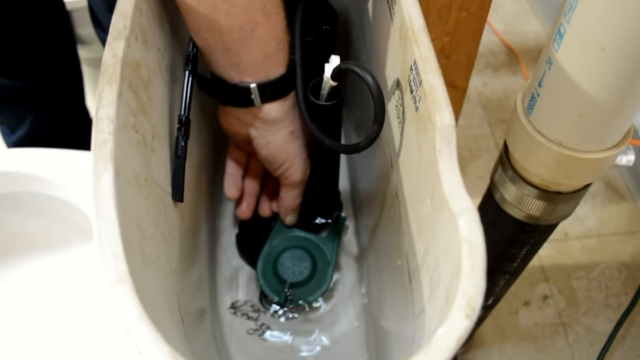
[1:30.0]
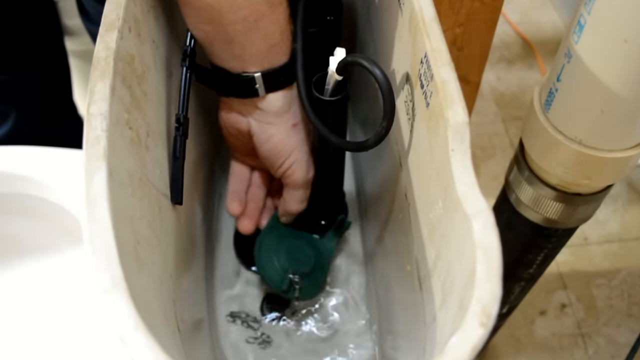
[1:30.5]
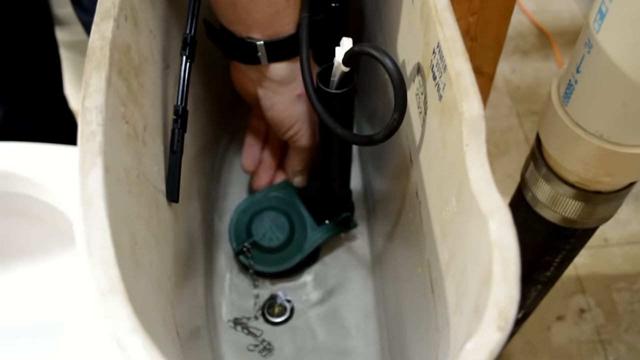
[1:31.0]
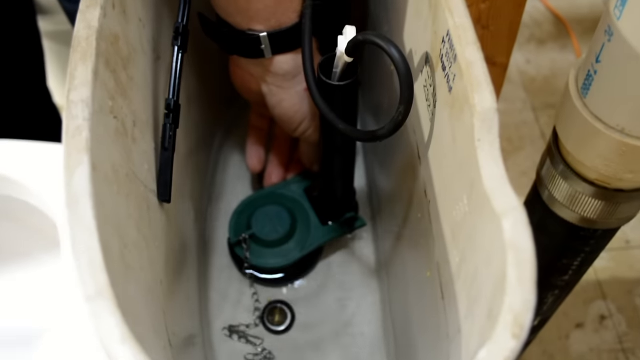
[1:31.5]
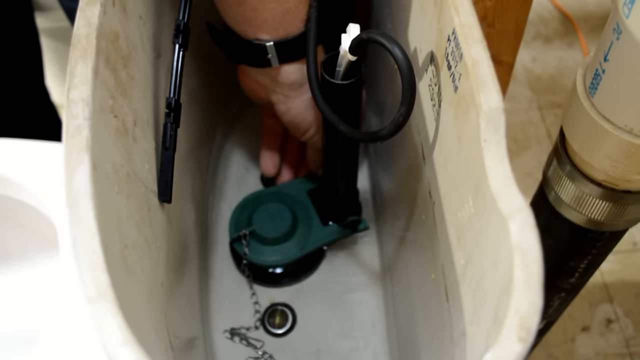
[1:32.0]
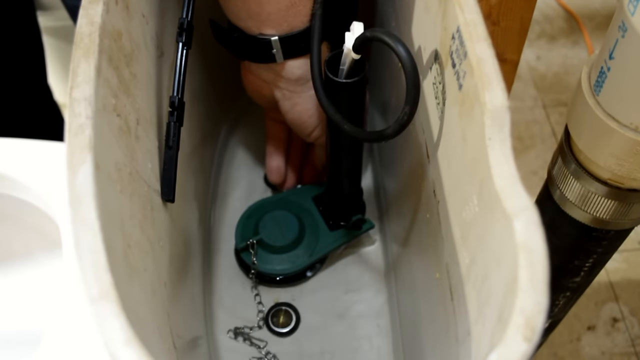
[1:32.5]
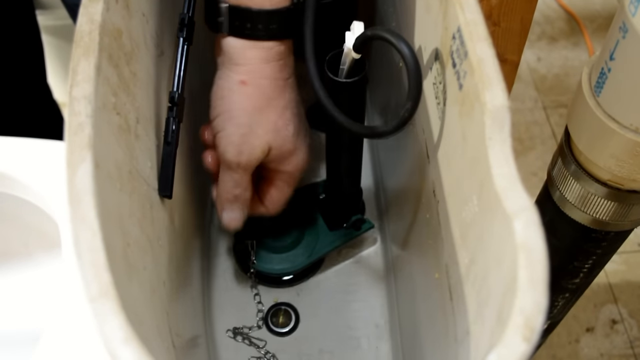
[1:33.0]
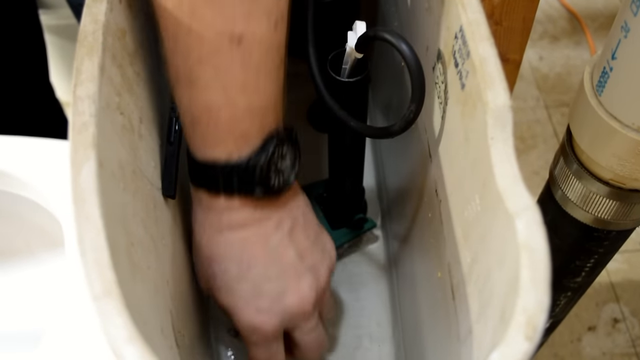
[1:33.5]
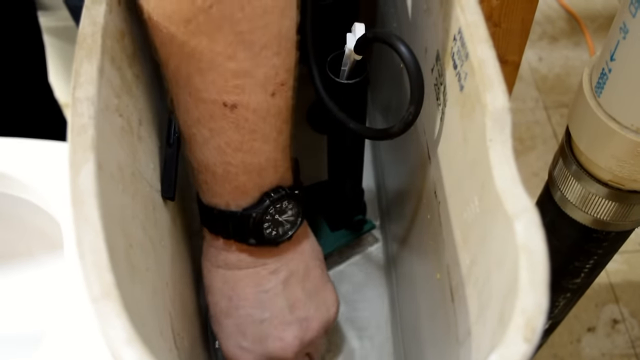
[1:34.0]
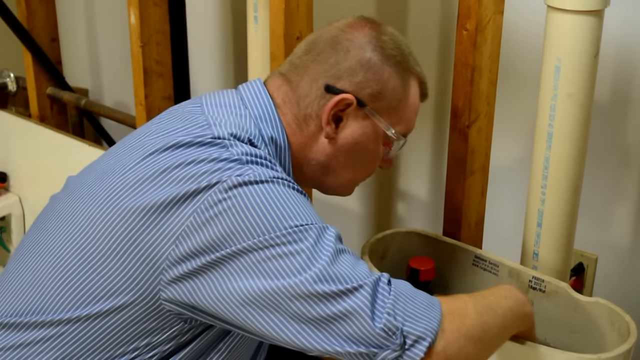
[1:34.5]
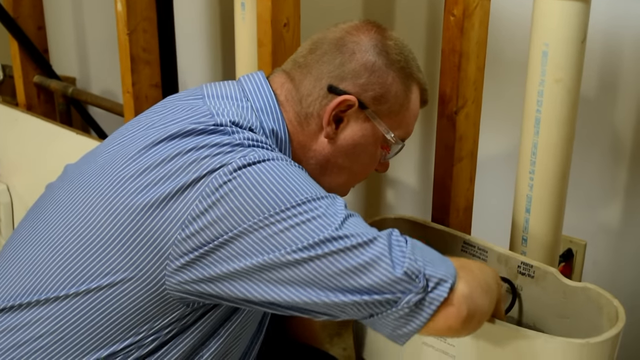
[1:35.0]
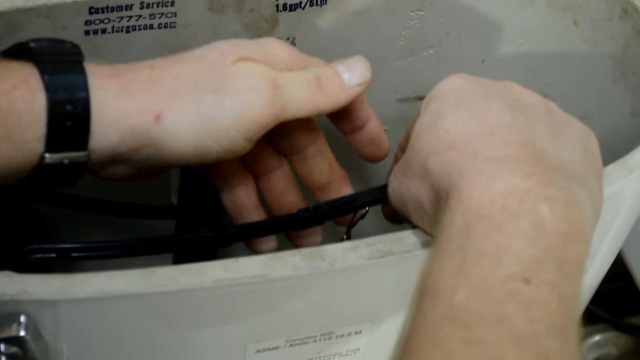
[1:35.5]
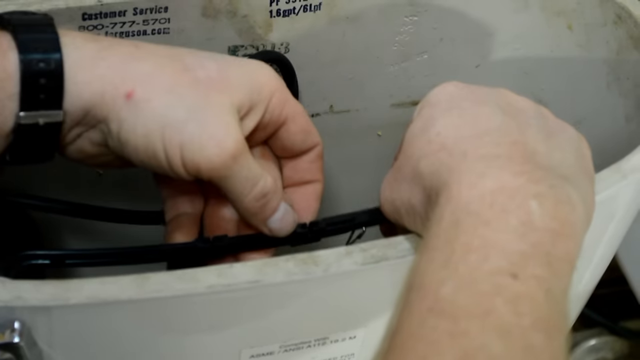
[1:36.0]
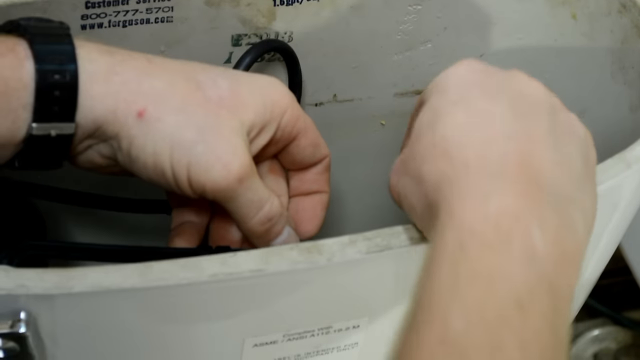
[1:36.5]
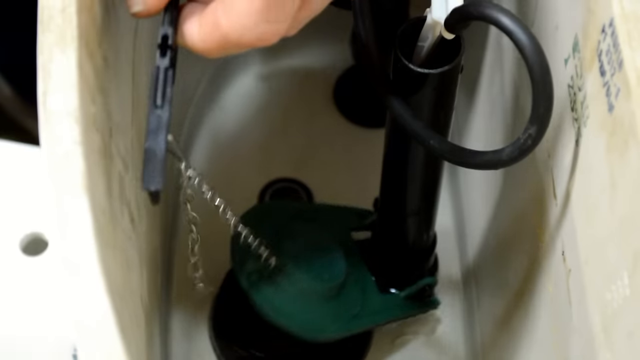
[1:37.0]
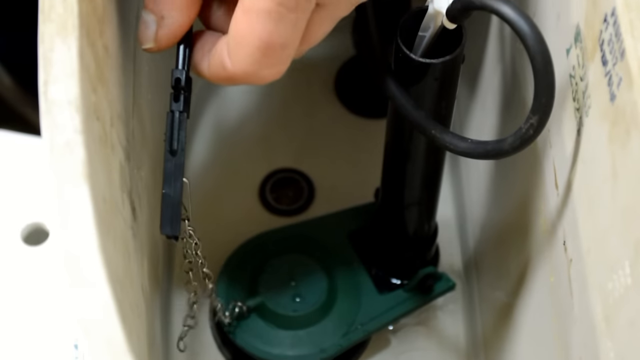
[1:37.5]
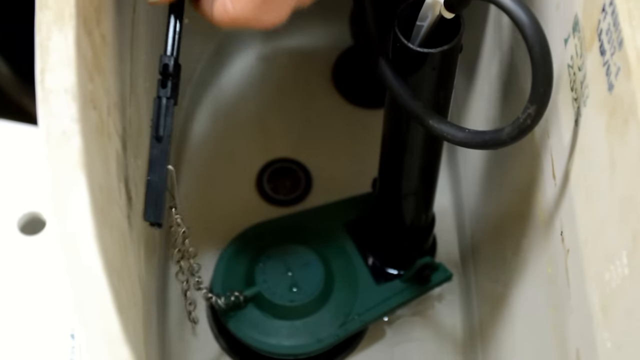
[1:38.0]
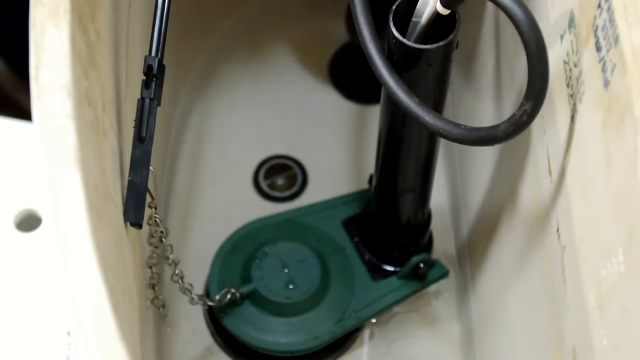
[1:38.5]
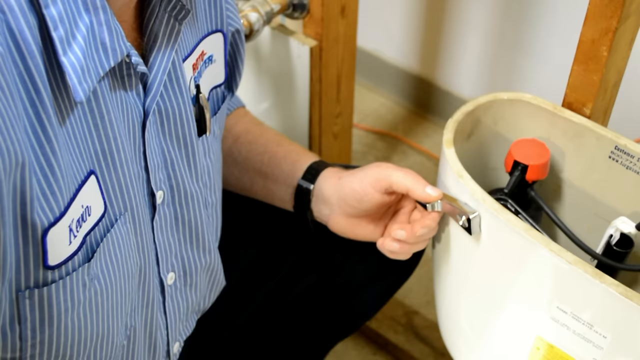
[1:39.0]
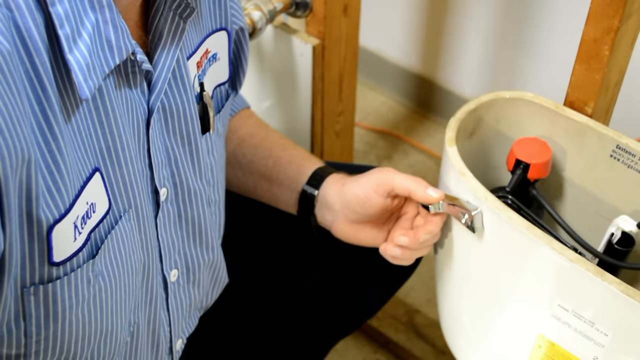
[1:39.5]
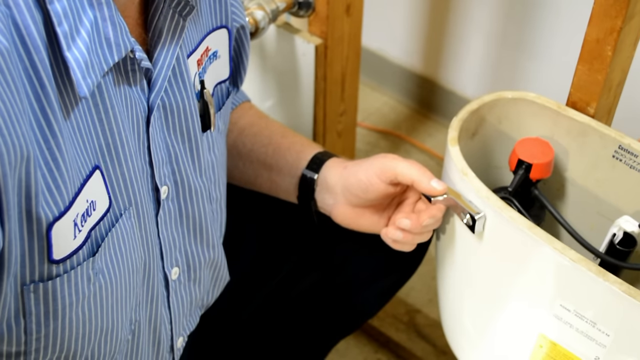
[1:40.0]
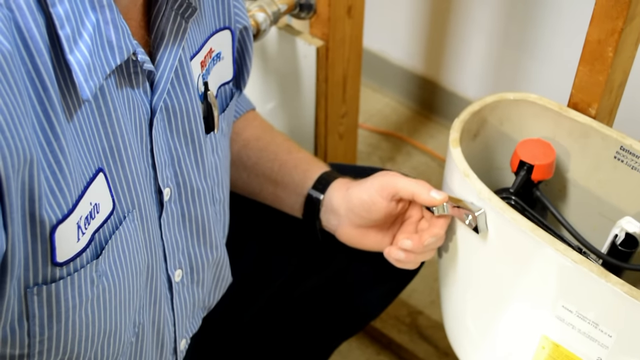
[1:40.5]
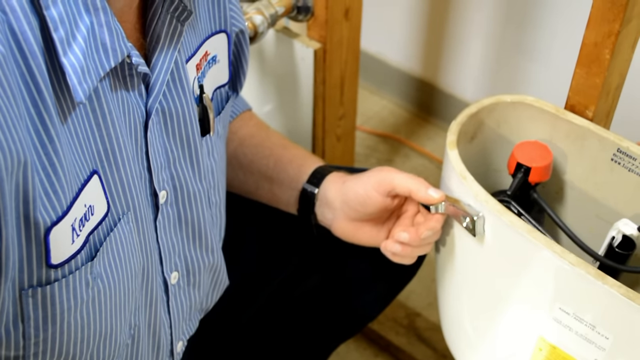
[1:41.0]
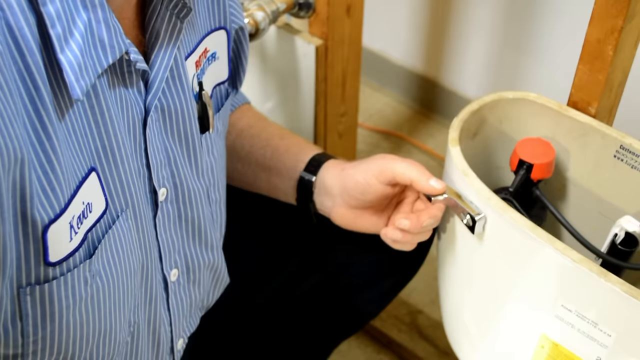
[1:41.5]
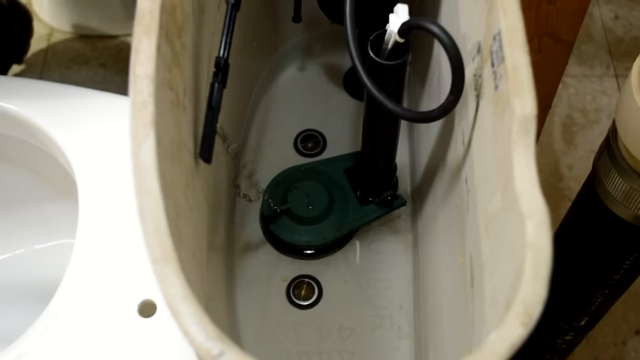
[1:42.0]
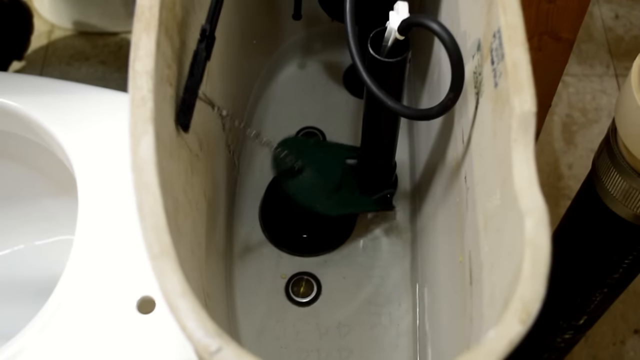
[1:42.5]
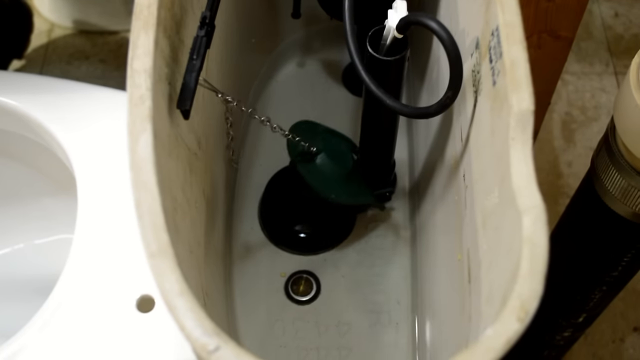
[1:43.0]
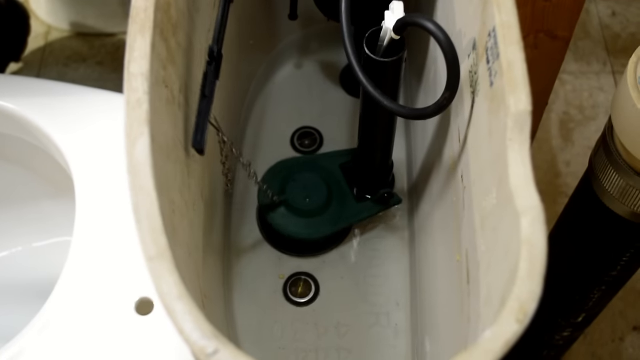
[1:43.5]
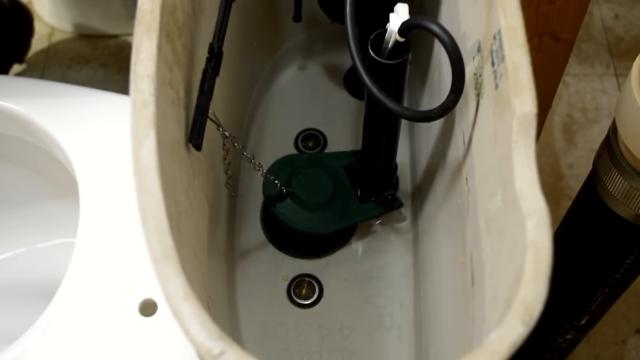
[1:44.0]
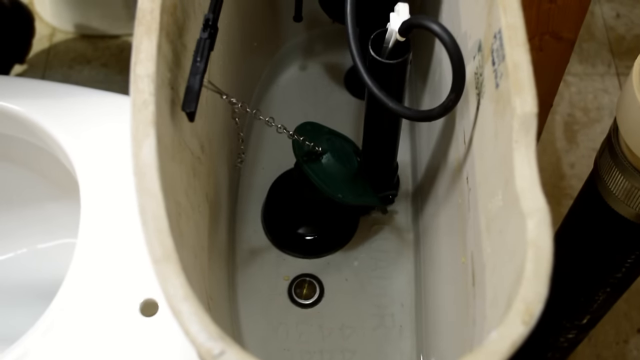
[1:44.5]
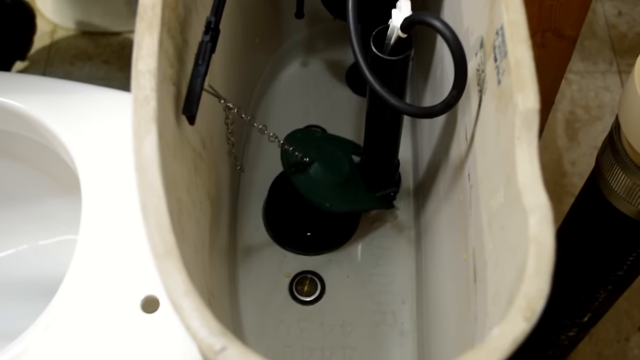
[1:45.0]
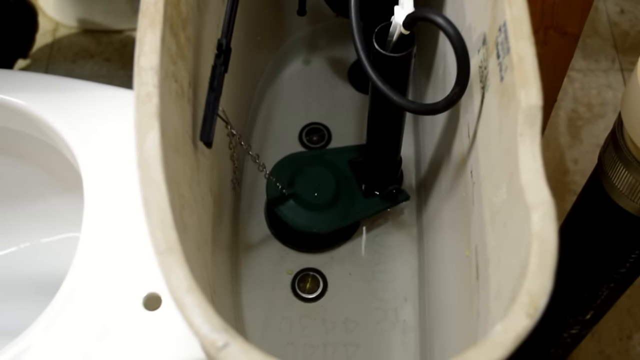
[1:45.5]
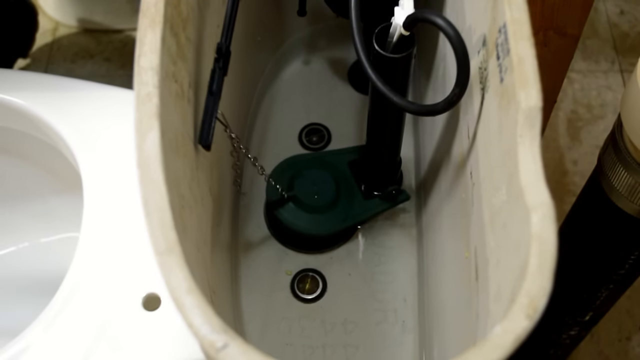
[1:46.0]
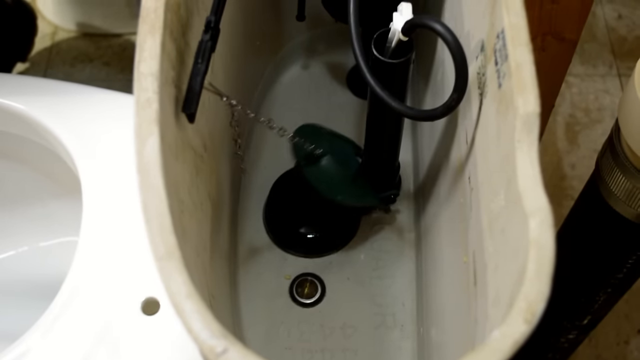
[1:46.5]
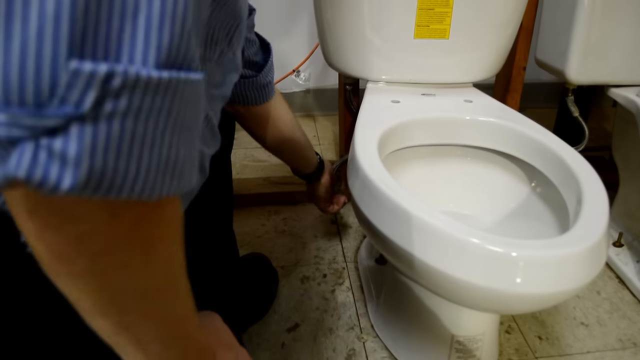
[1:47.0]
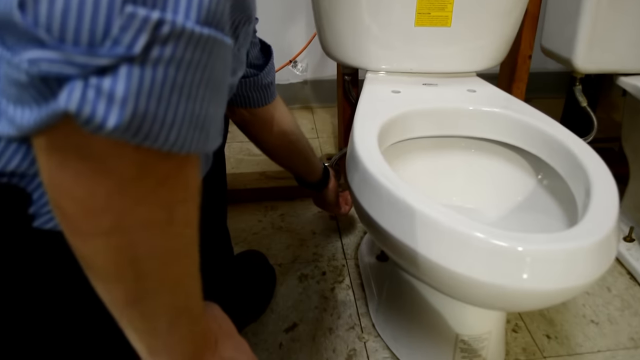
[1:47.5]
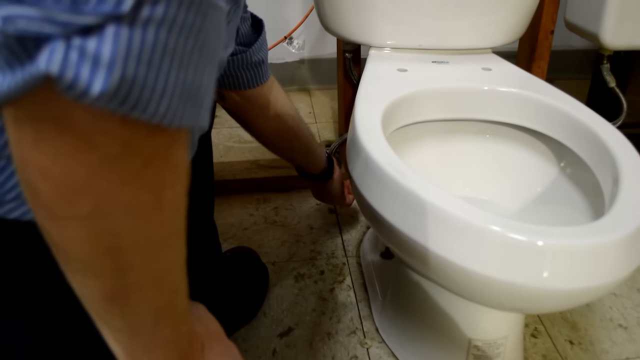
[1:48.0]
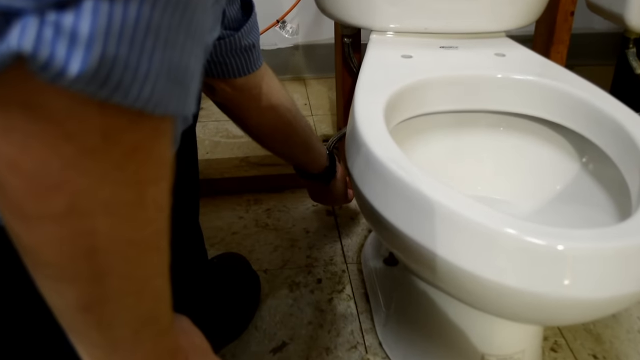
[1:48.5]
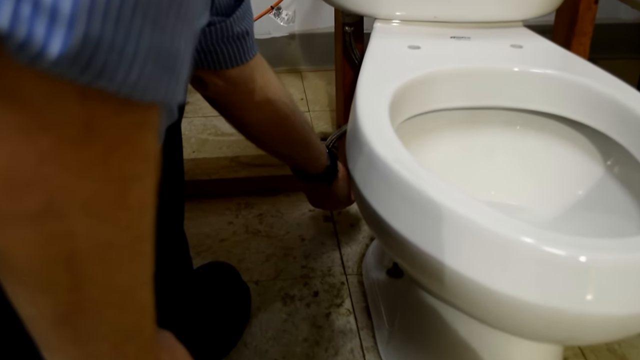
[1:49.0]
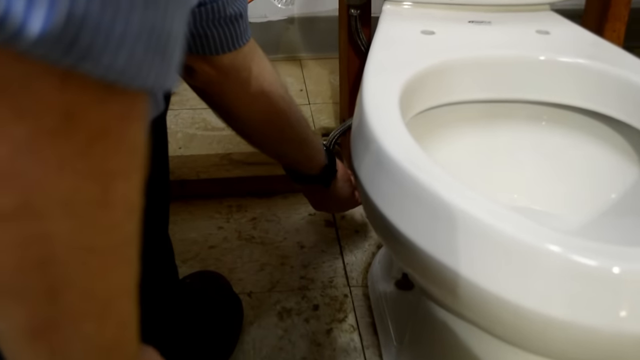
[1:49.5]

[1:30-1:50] The plumber places the seal inside, sealing the water inside the tank once again. He pulls on the mechanism, checking that it opens when pulled up and closes back down. Inside the tank, the mechanism uses the water level to pull the seal and open the drain. He wears glasses while he works. He tests the flush, and it opens and seals properly. An orange thing is inside the toilet tank, left untouched. At the end he reopens the water supply so the toilet fills back up for testing, and the floor tiles and his shoes are visible.